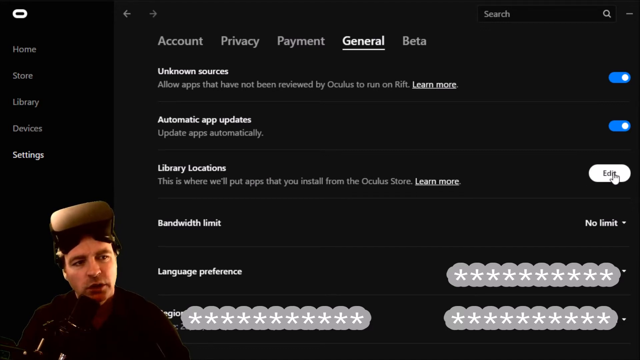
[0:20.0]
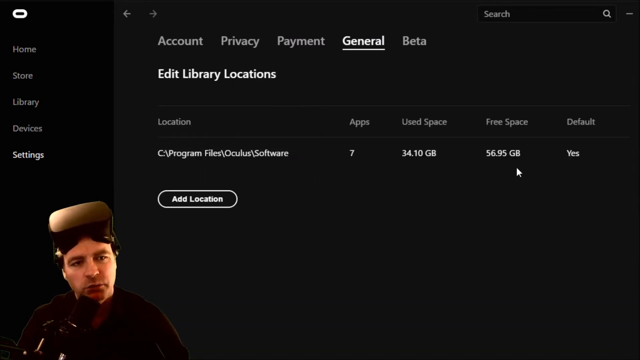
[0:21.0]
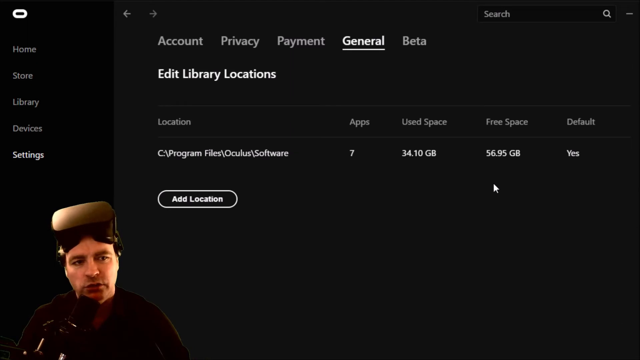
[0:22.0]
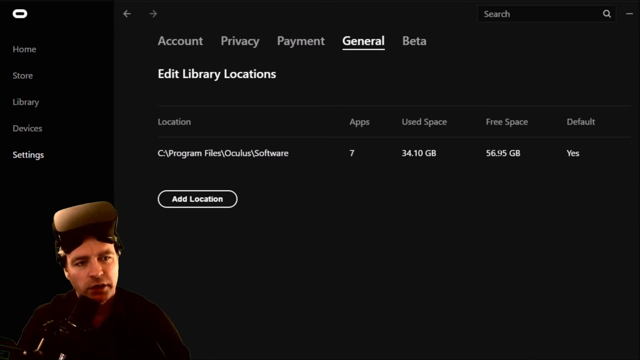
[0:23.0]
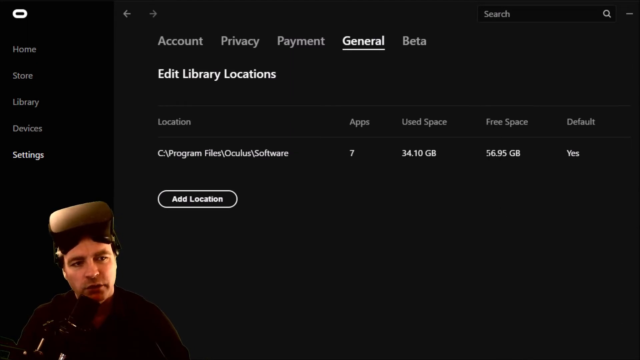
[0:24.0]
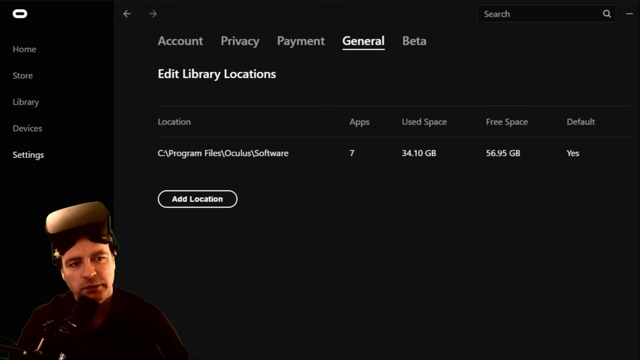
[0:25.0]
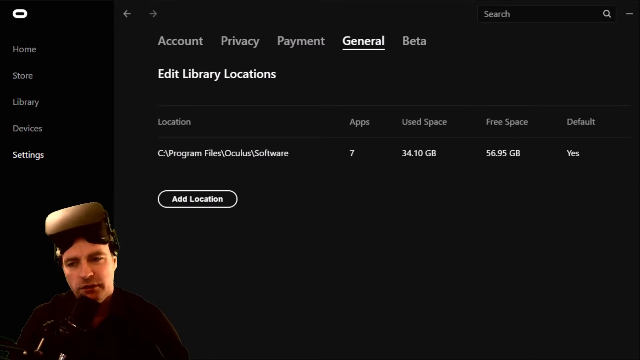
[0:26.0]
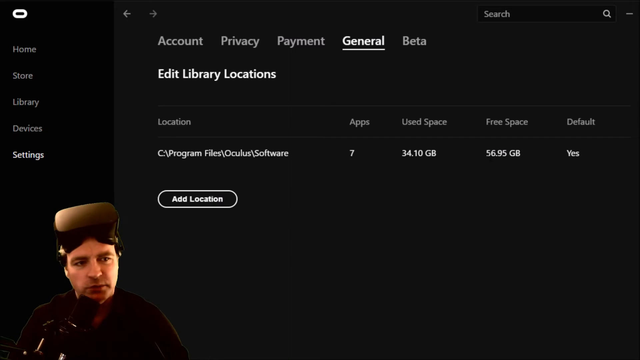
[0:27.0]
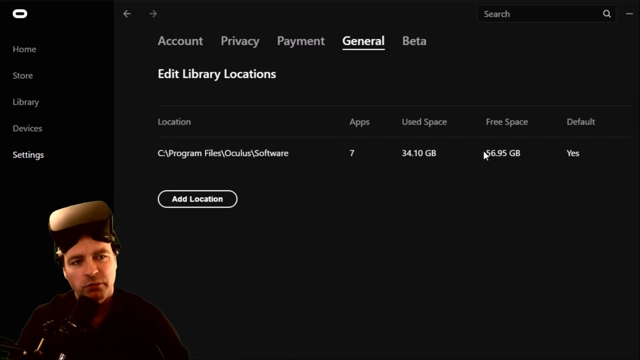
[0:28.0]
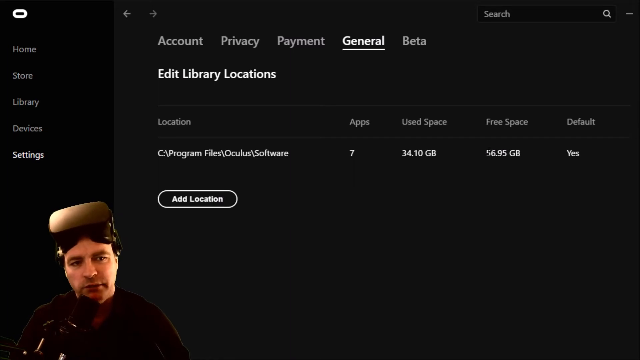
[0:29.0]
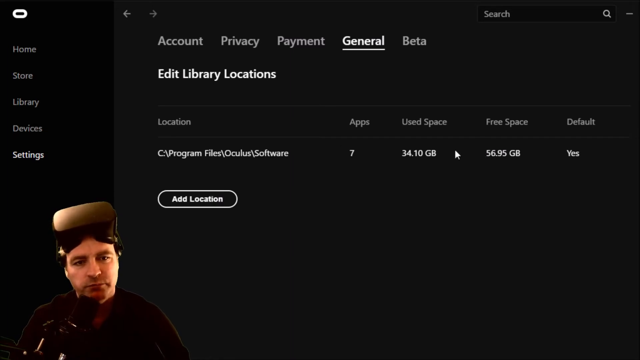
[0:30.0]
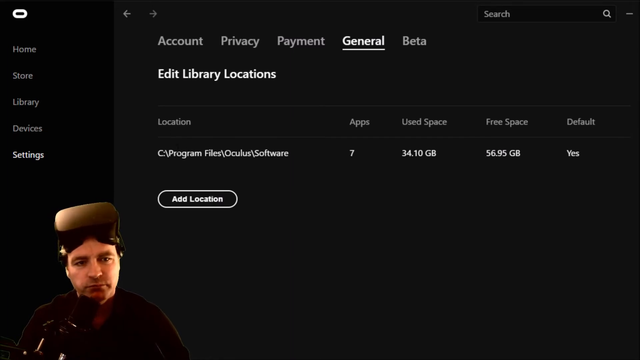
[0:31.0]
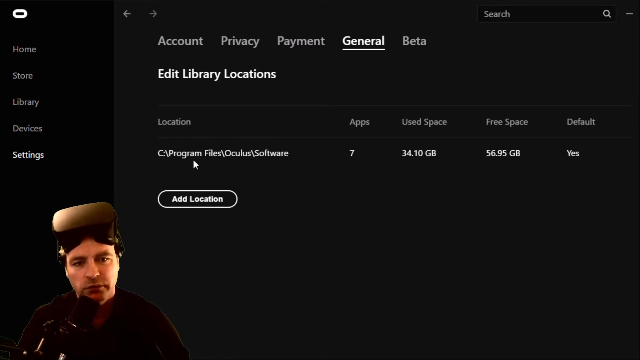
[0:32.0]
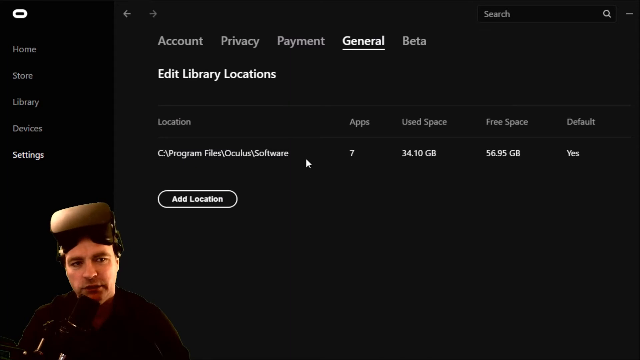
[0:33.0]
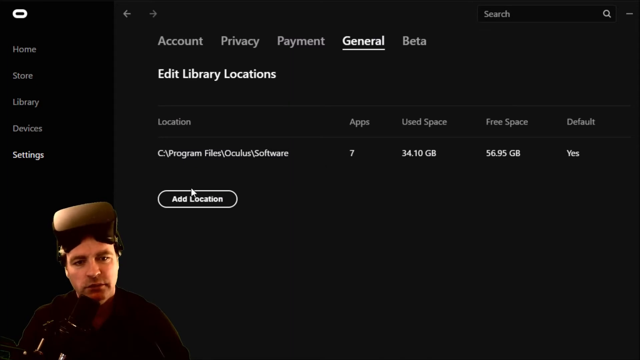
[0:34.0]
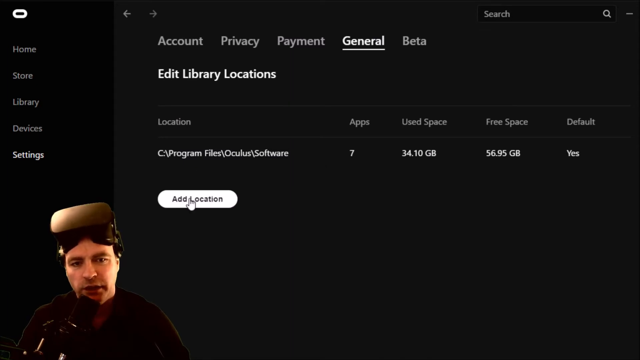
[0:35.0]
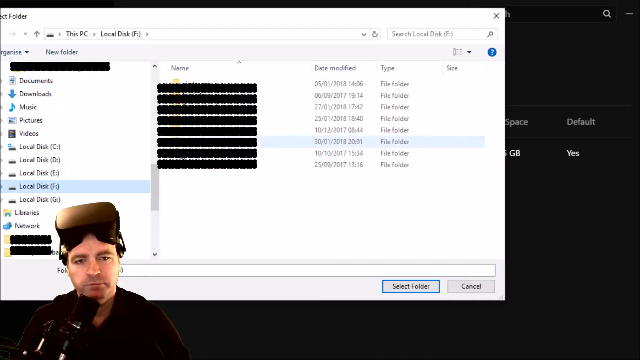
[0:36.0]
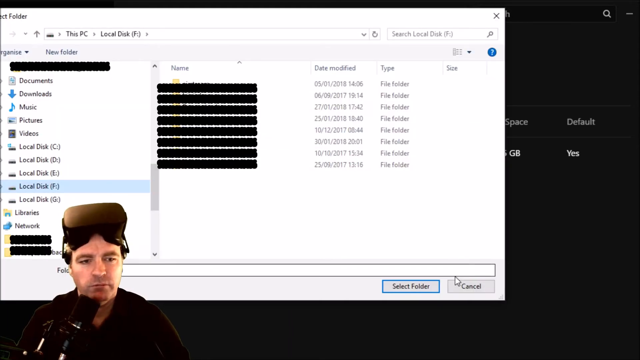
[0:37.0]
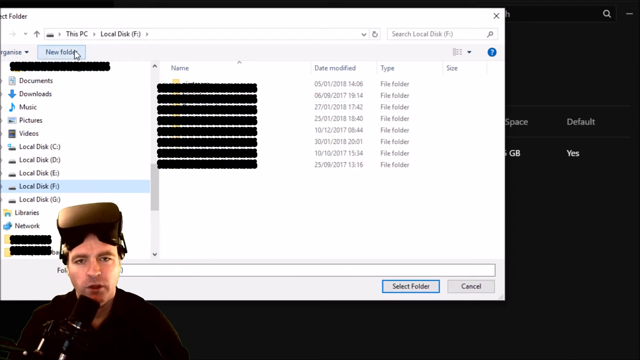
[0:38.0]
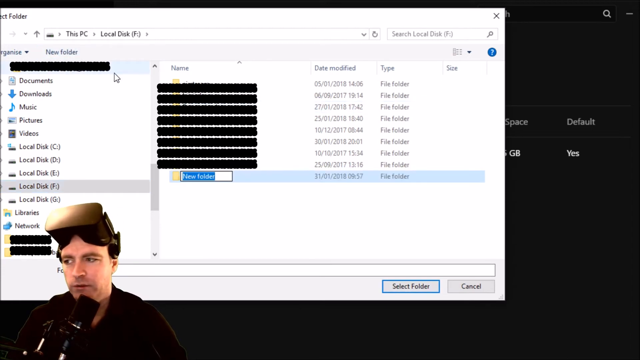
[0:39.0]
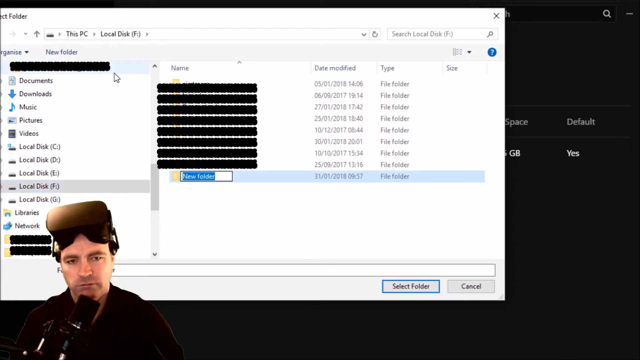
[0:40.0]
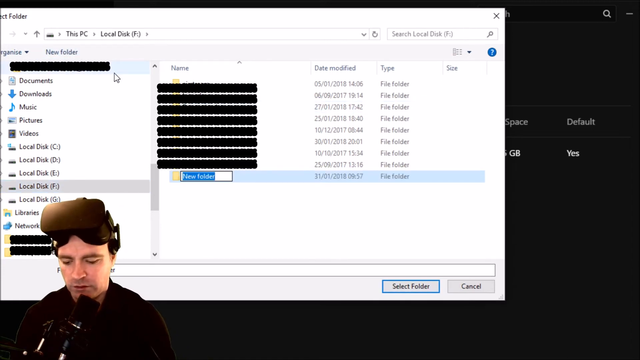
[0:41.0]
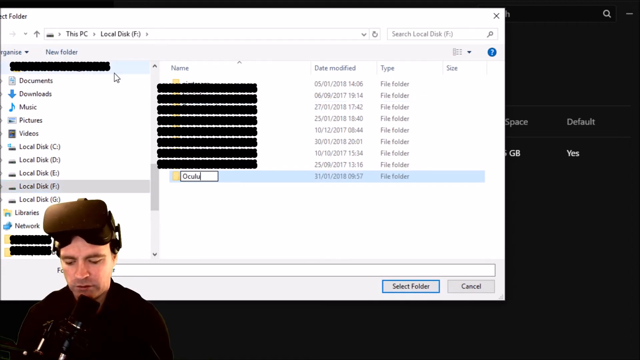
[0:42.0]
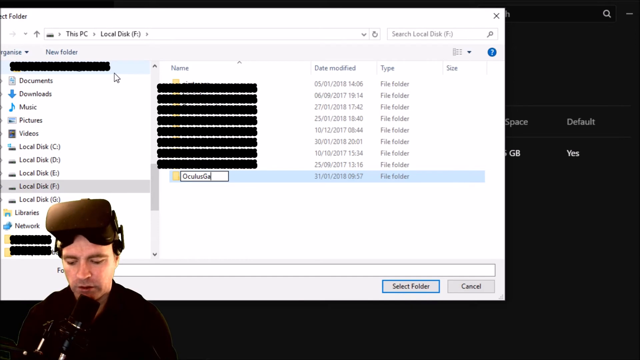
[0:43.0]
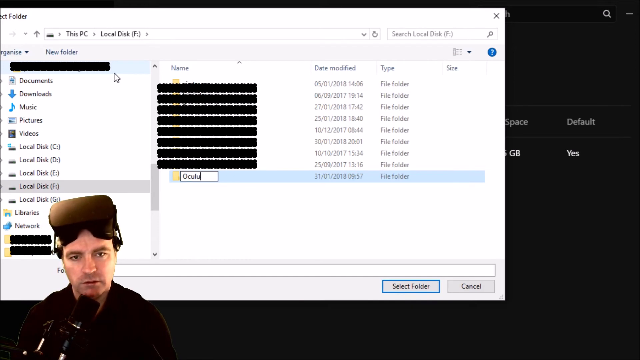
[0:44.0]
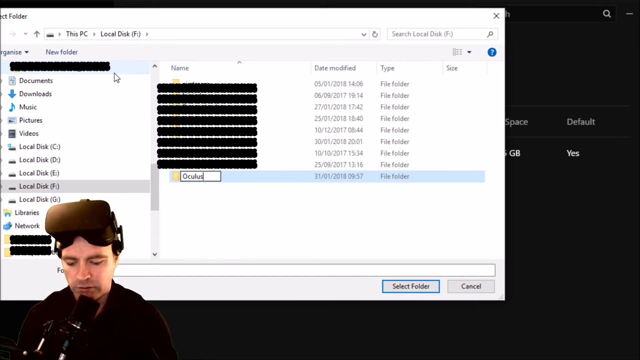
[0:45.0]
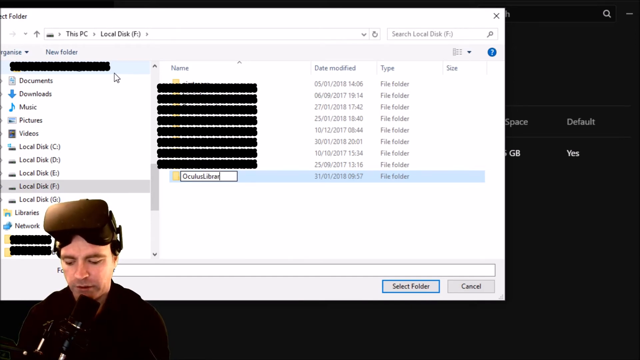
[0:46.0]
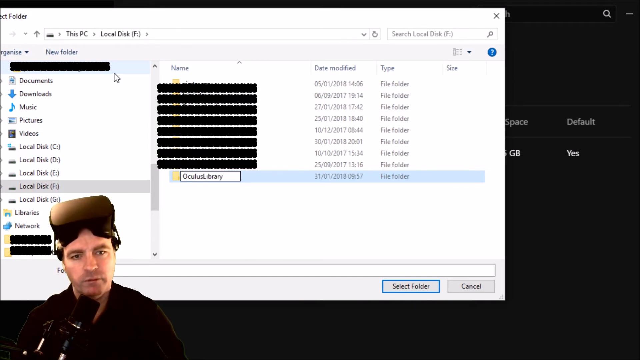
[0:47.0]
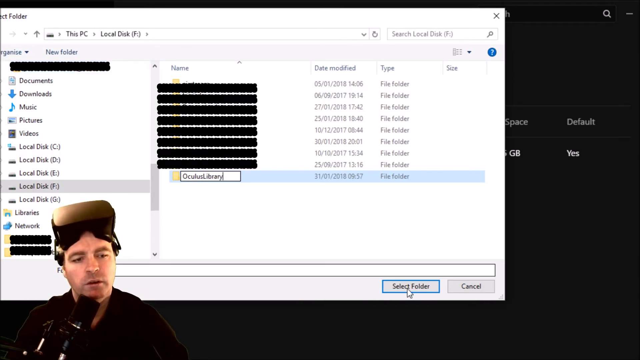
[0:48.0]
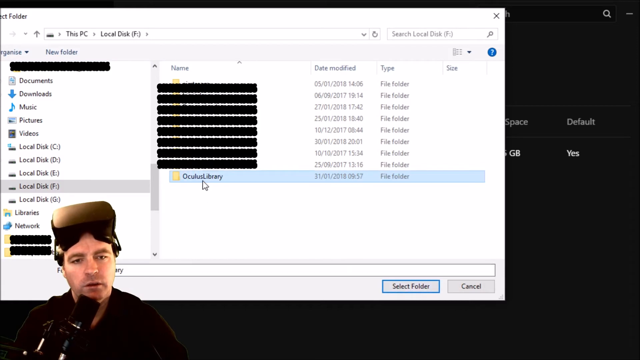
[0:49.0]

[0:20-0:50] Against the black background of the screen, the person's mouse clicks the edit button on the right side, next to library locations. The next screen is still under General, now under "edit library locations", and shows a location in the software folder within the Oculus program files, along with "app 7", "use space", "free space" and "default". He hovers the mouse pointer around the free space figure and highlights different parts of the screen, then clicks the add location button, which opens another window asking him to select a folder. Everything in it is grayed out, so his files are not visible. He creates a new folder, typing "GA", deleting it, then typing "Oculus library", and clicks "Select Folder".